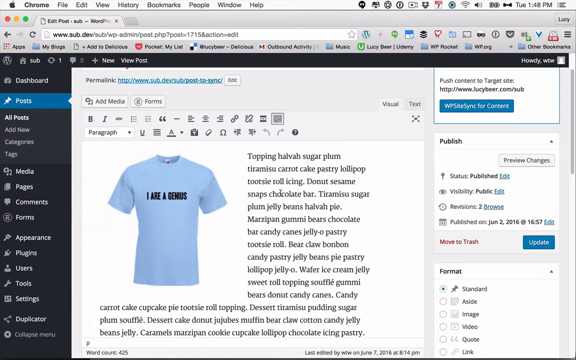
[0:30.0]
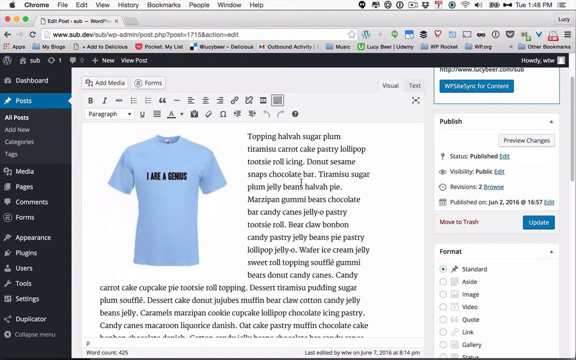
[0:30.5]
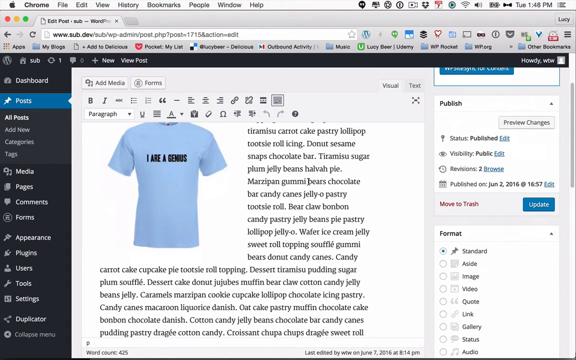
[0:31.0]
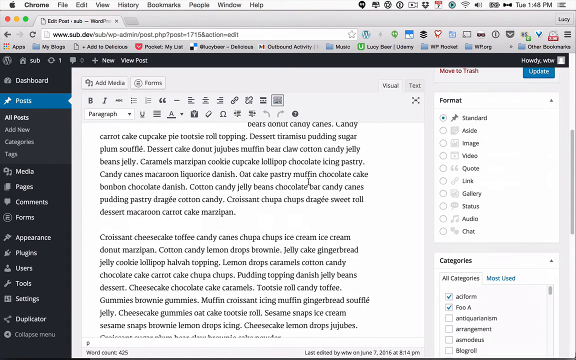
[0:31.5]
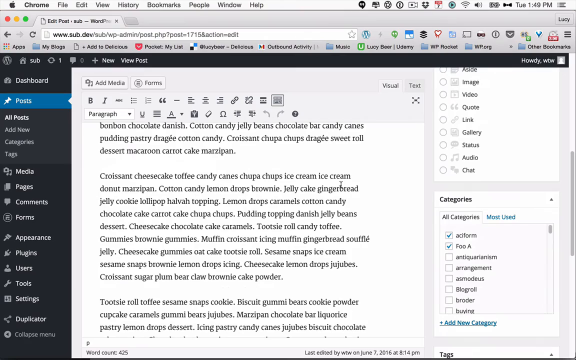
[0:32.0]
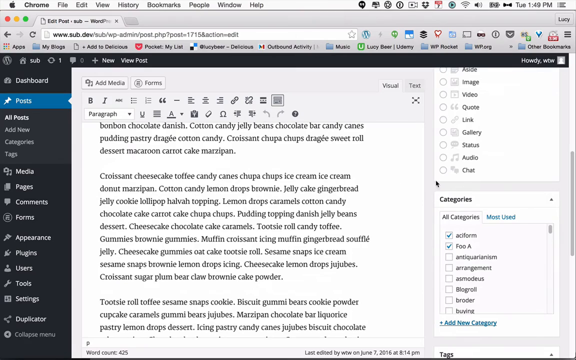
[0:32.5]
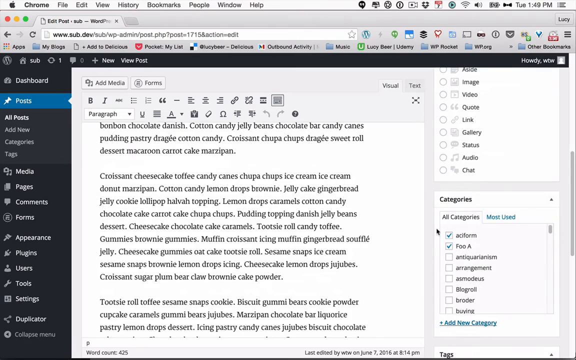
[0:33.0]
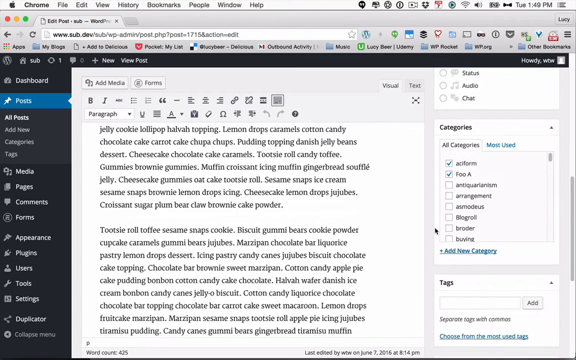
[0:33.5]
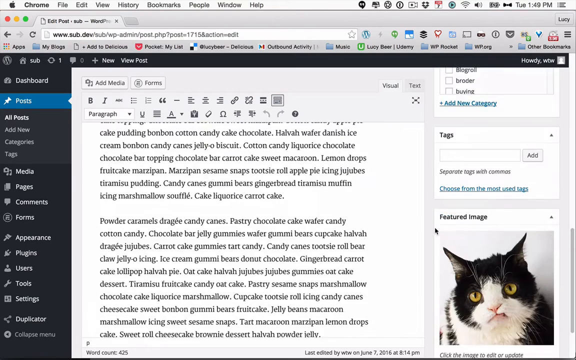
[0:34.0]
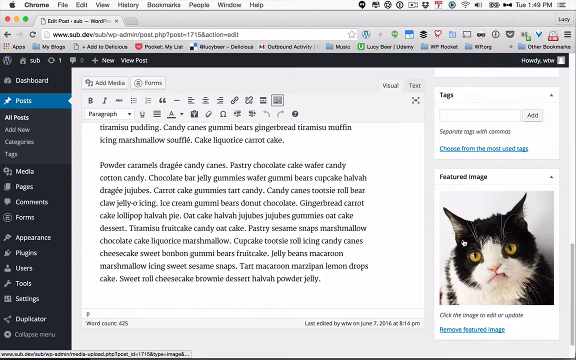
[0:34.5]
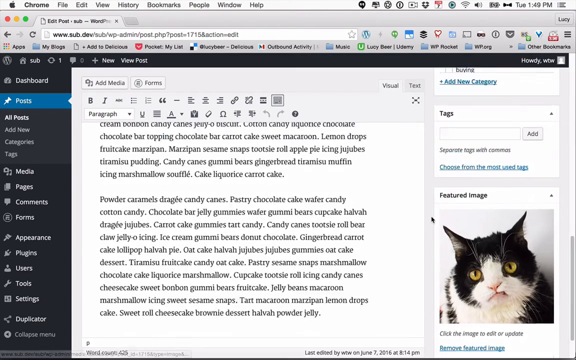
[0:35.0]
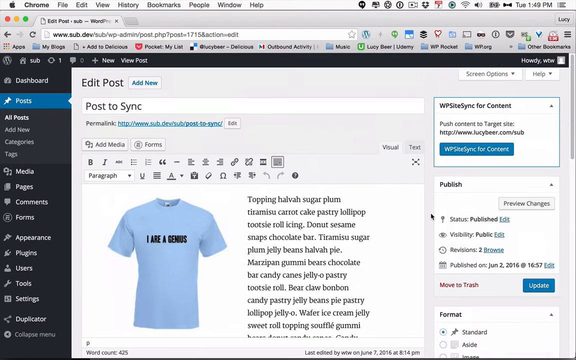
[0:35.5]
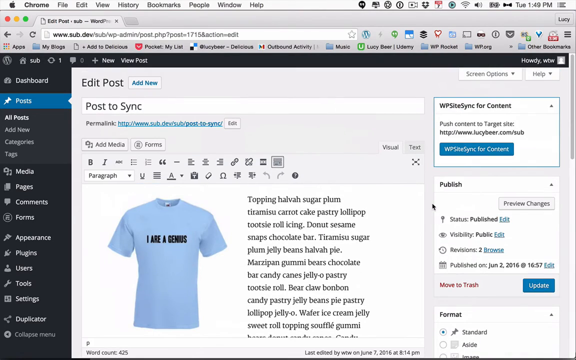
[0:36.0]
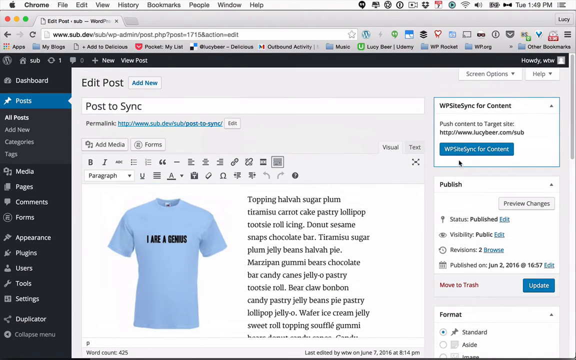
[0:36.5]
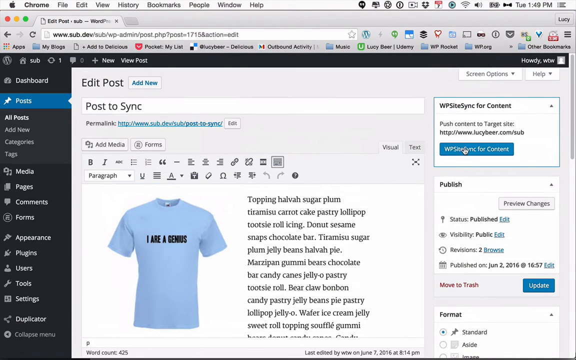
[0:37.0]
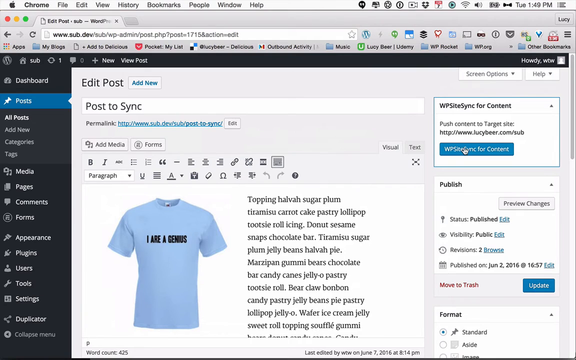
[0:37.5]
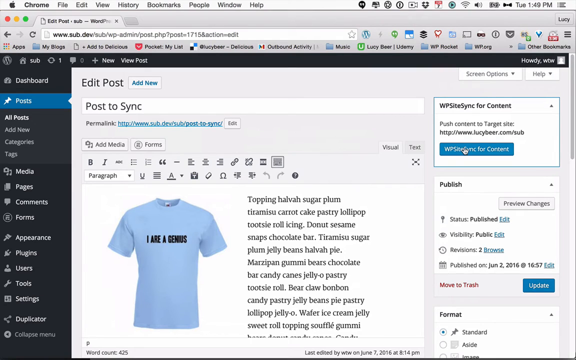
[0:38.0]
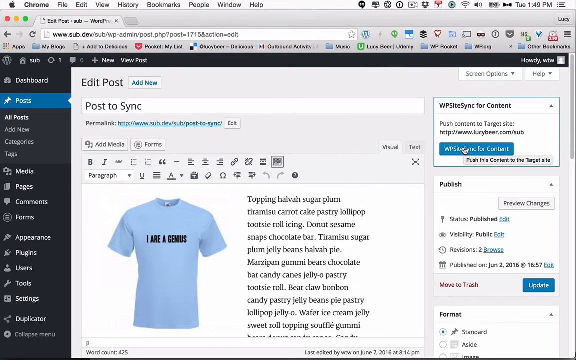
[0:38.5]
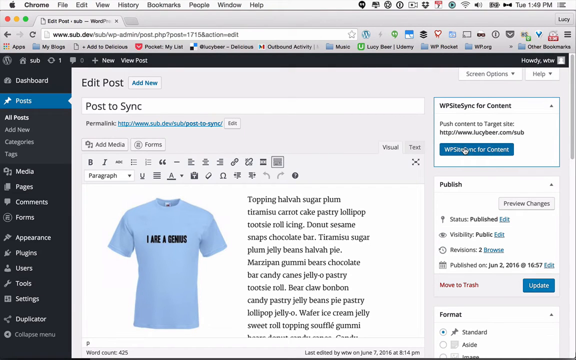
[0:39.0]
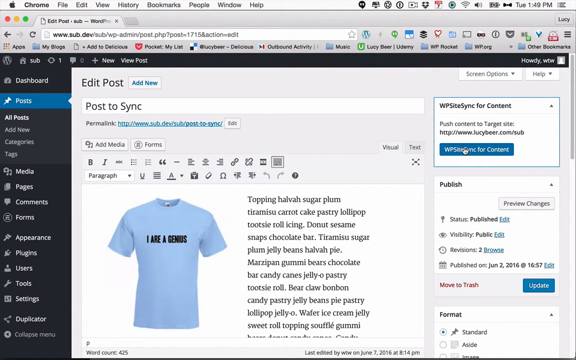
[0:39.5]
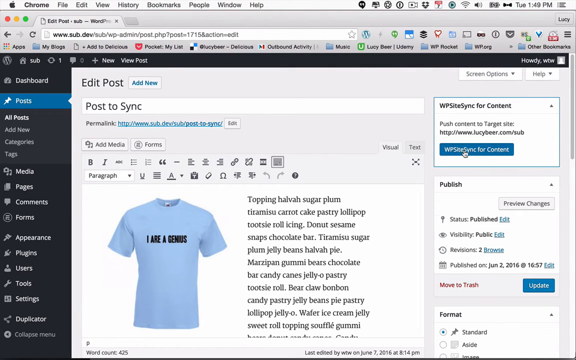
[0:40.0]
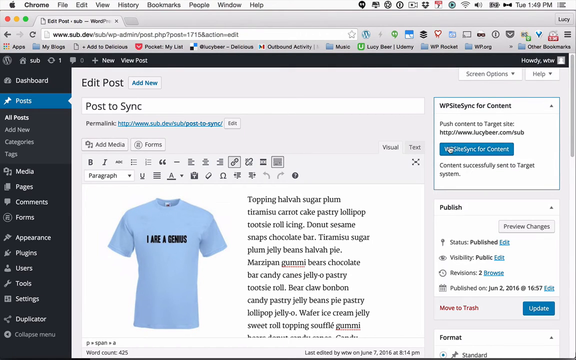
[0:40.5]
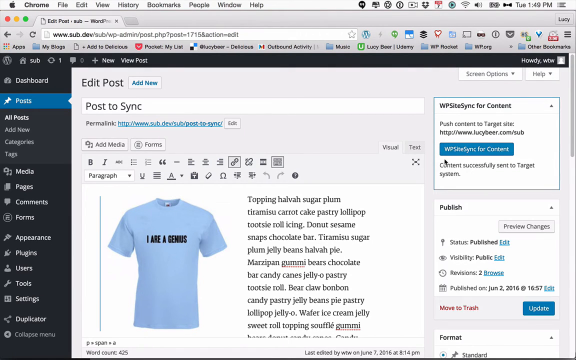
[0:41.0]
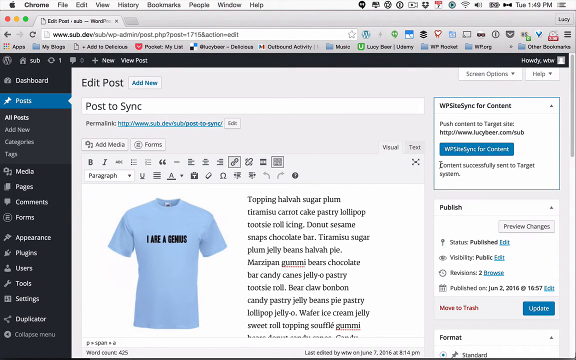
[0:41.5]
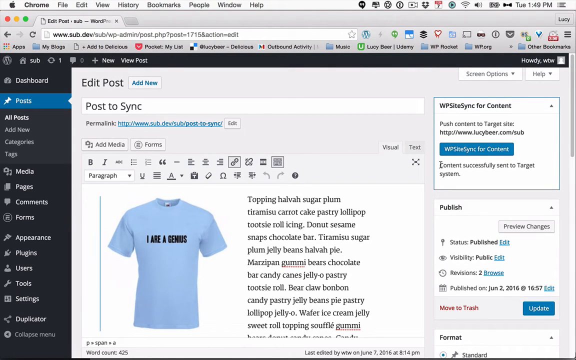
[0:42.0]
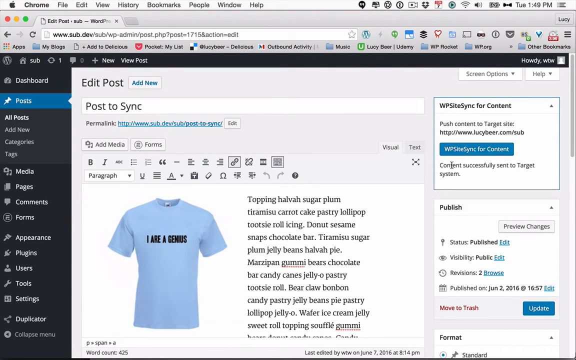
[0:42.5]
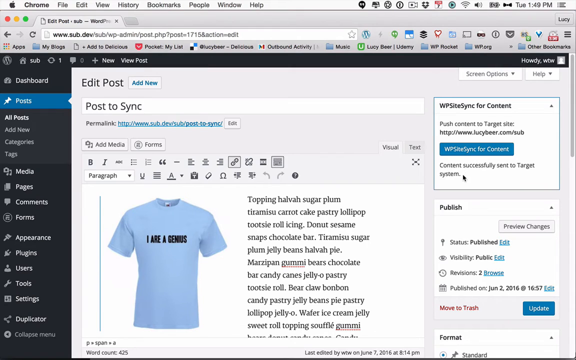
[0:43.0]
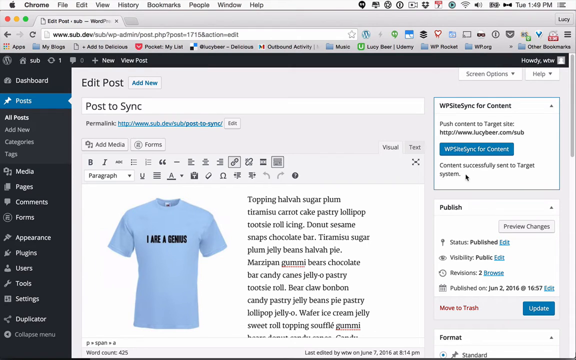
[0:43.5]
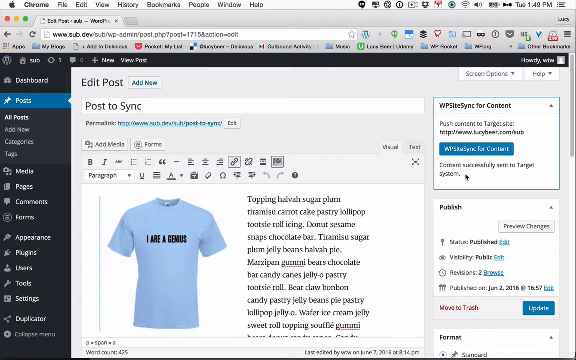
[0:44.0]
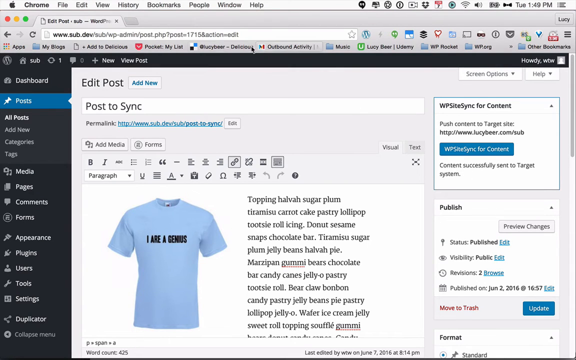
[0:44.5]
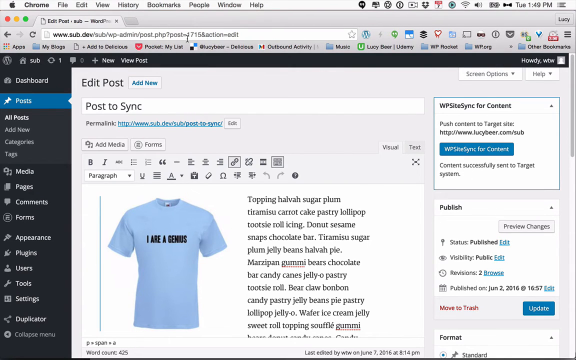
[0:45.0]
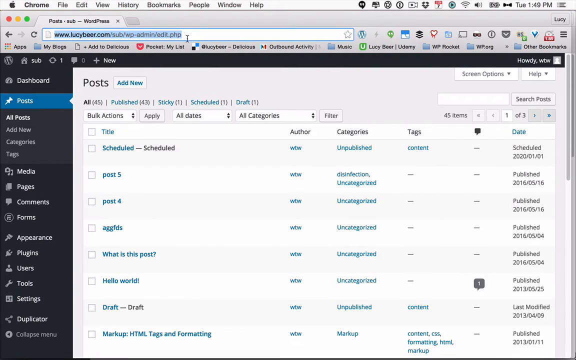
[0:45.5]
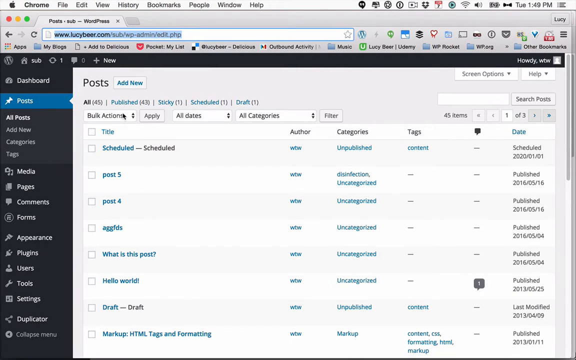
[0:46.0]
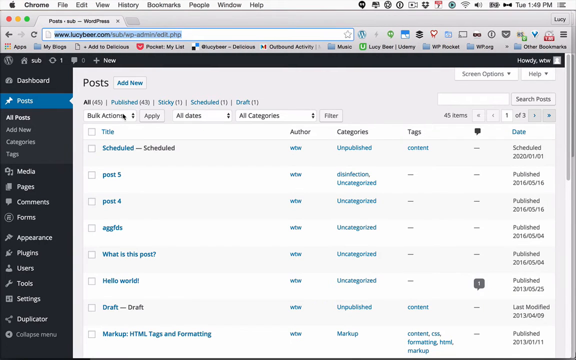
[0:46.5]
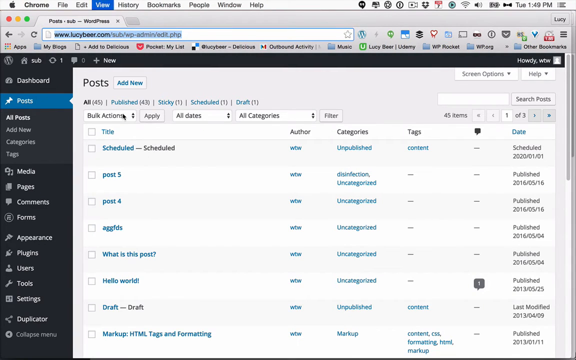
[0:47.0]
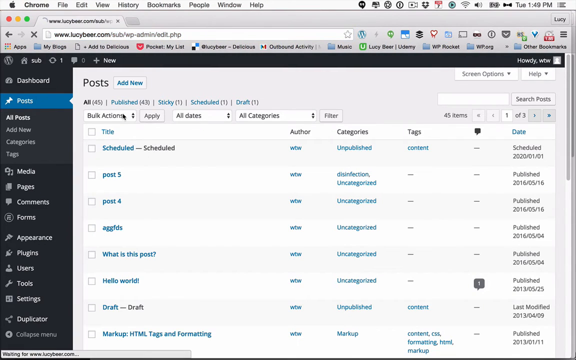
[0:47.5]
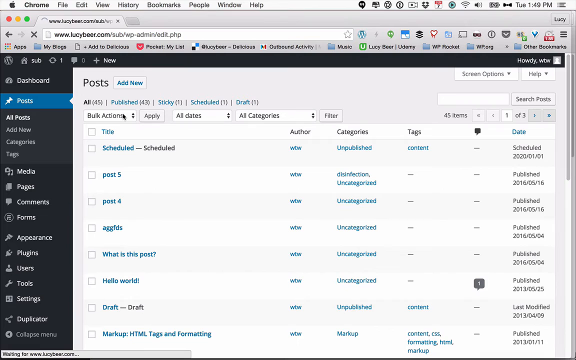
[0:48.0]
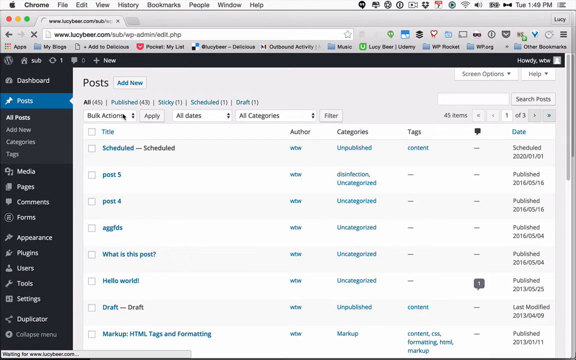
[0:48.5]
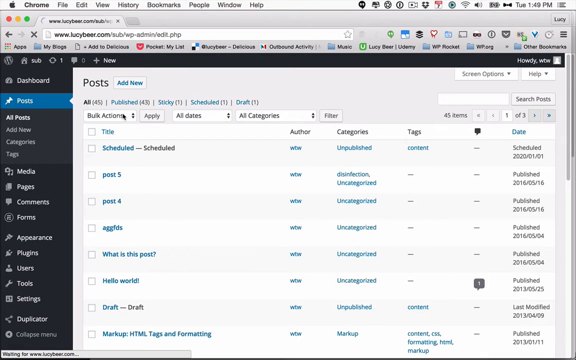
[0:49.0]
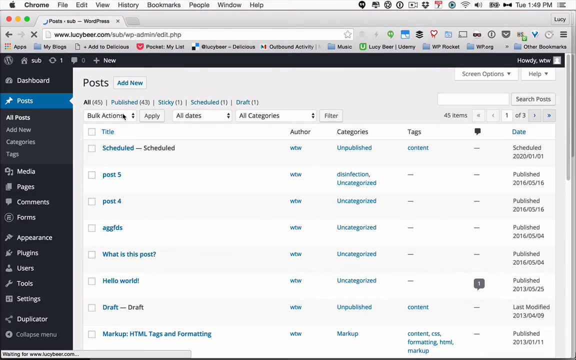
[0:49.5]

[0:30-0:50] The site with the T-shirt is shown, with a large amount of text. A cat image pops up in the lower right-hand corner; it is black and gray with green eyes and has a weird face. He clicks a button that says "Web Style for Content" and scrolls up and down. The middle of the page holds a lot of text, and on the right is a section that says "tags" with "Choose from one of the most voted tags." The cat has a crinkled nose and a kind of twisted mouth. Its face is black on the top half and white on the bottom half, its nose is more white than black, it has white around its collar, and the rest of its body is black.